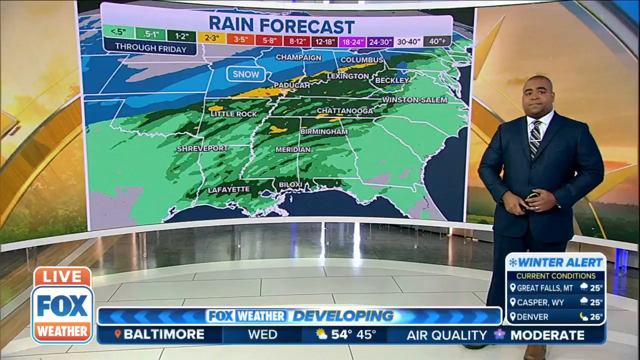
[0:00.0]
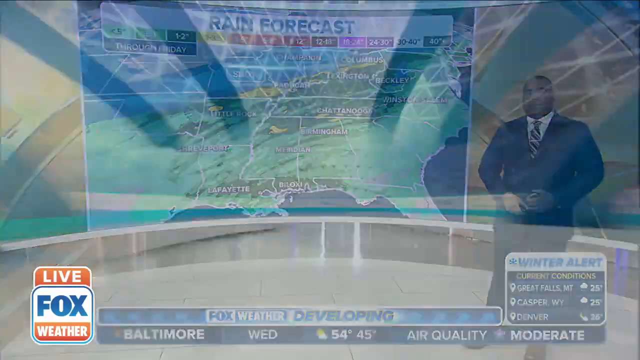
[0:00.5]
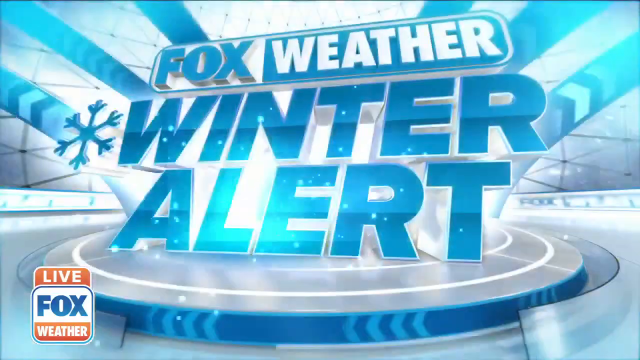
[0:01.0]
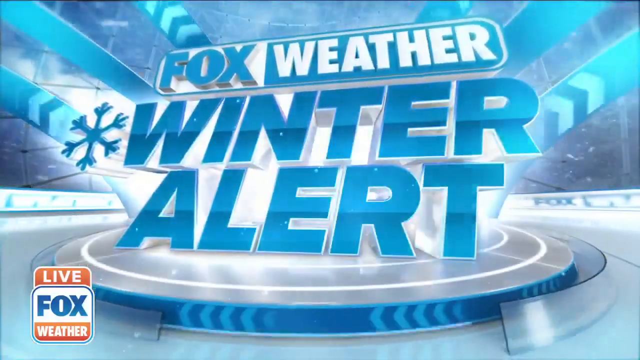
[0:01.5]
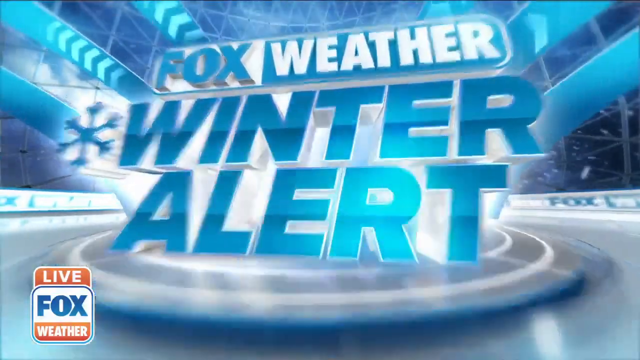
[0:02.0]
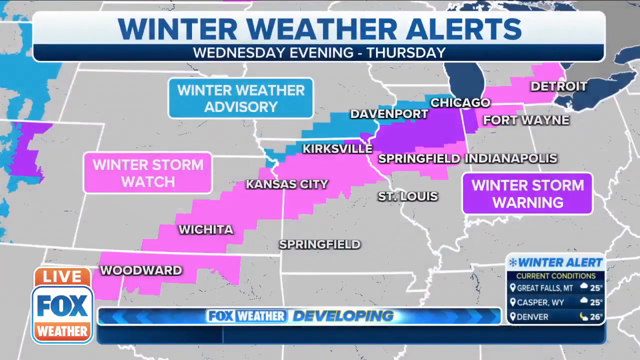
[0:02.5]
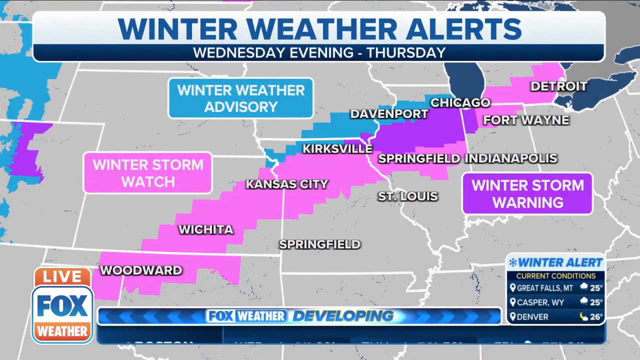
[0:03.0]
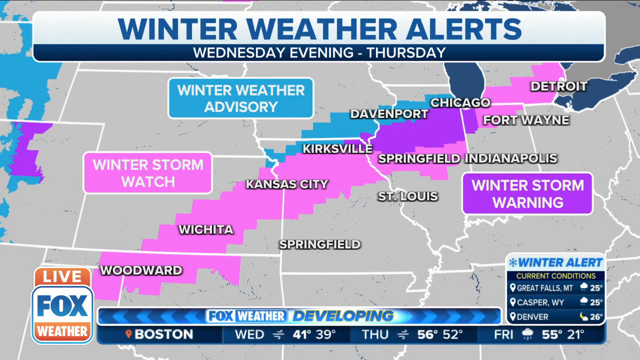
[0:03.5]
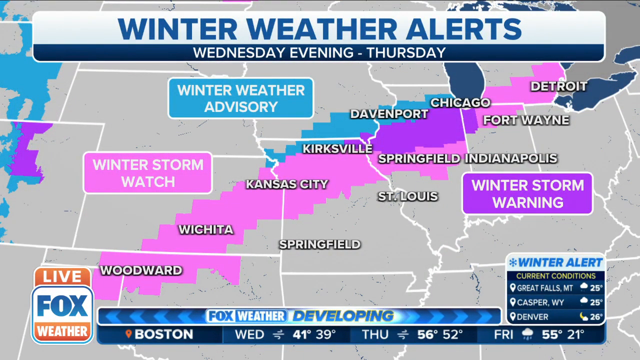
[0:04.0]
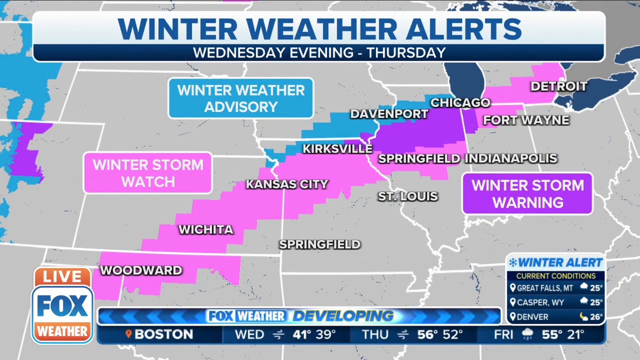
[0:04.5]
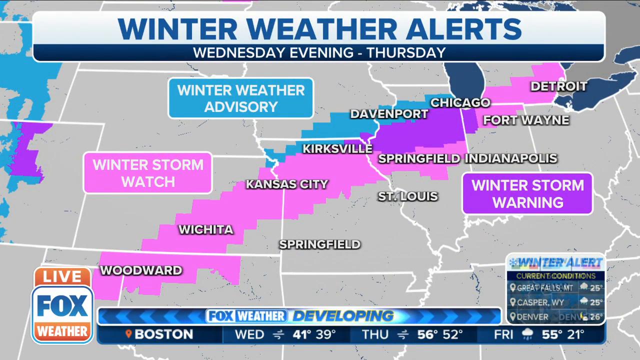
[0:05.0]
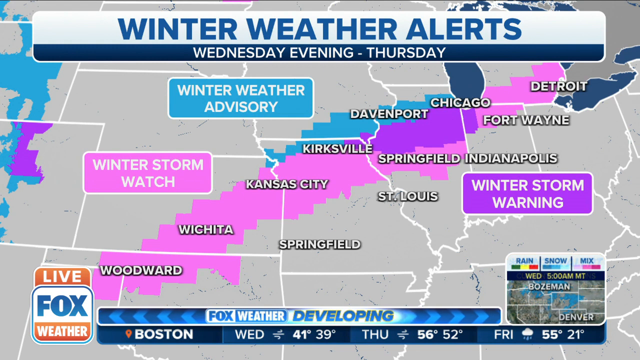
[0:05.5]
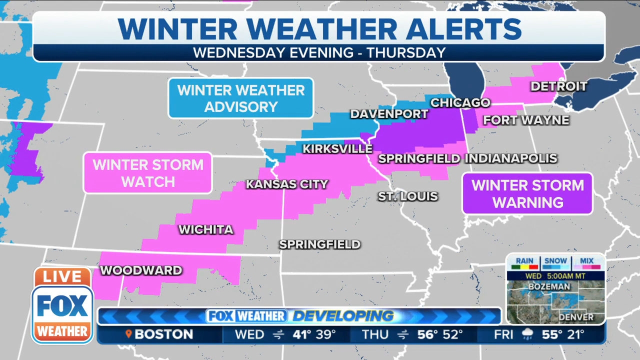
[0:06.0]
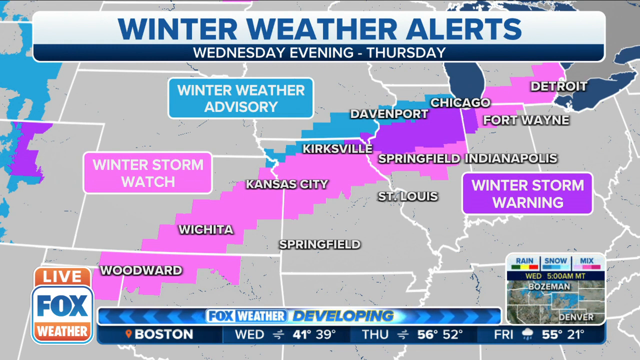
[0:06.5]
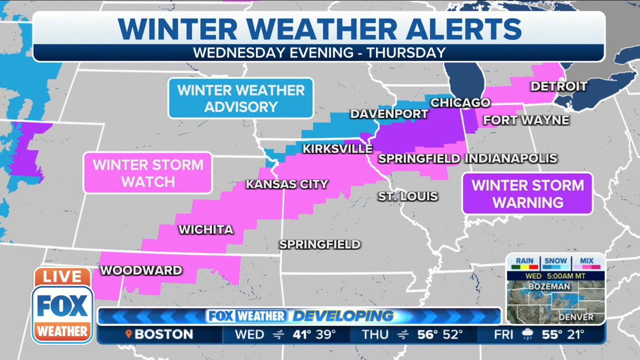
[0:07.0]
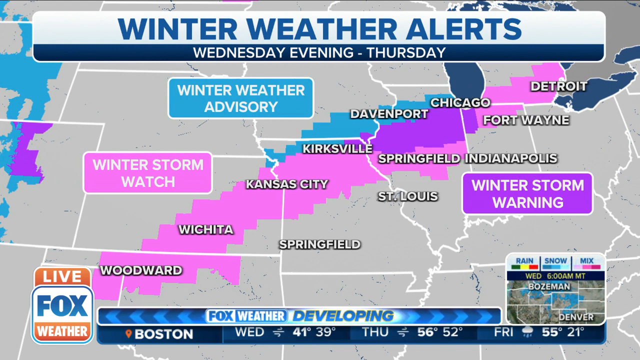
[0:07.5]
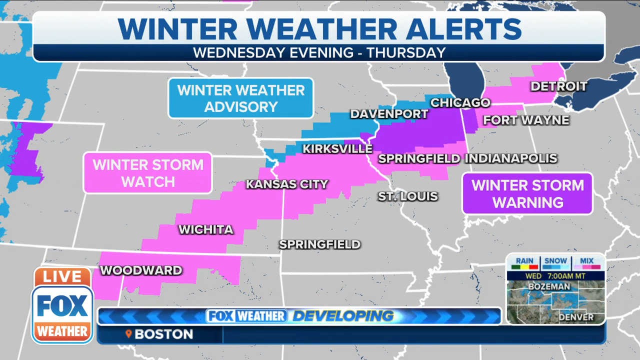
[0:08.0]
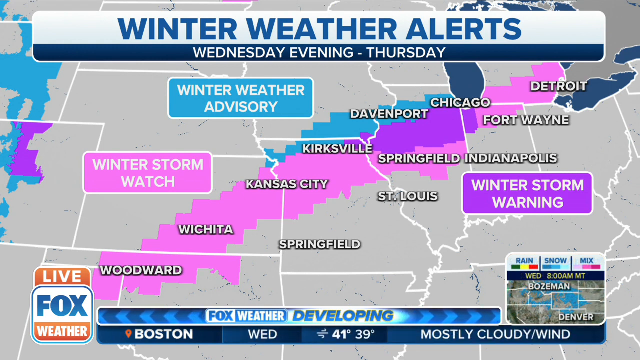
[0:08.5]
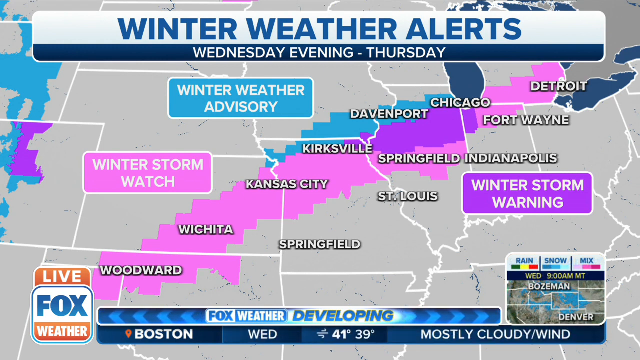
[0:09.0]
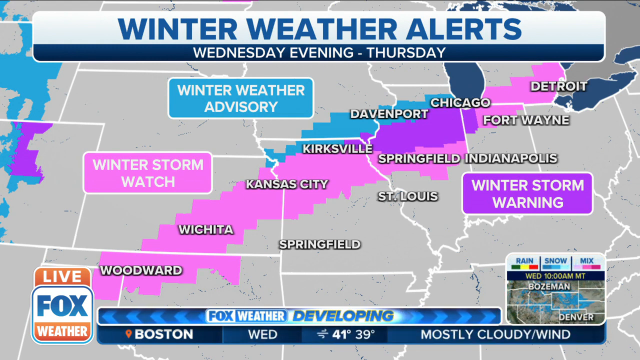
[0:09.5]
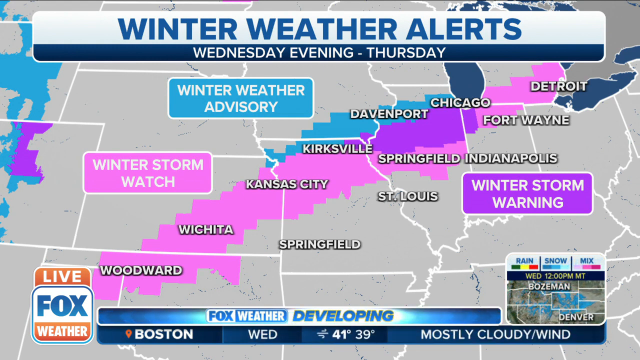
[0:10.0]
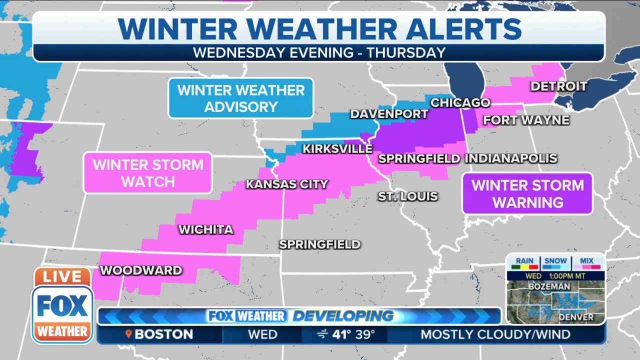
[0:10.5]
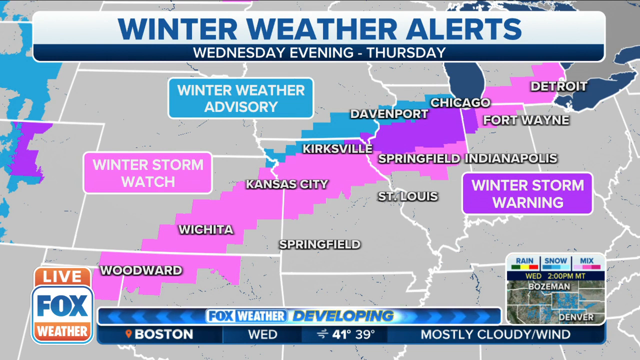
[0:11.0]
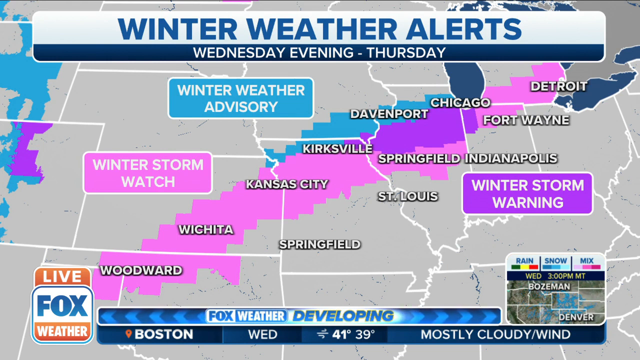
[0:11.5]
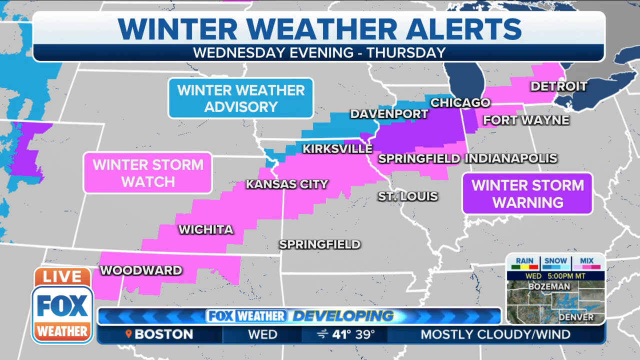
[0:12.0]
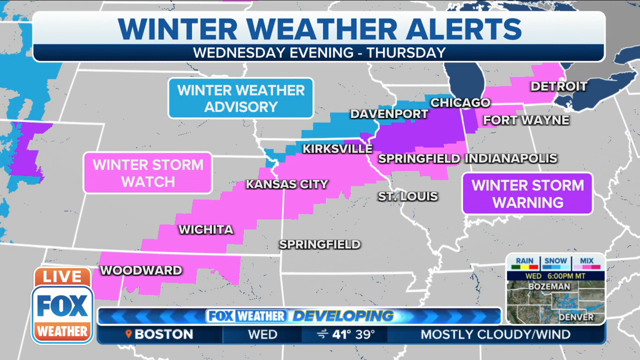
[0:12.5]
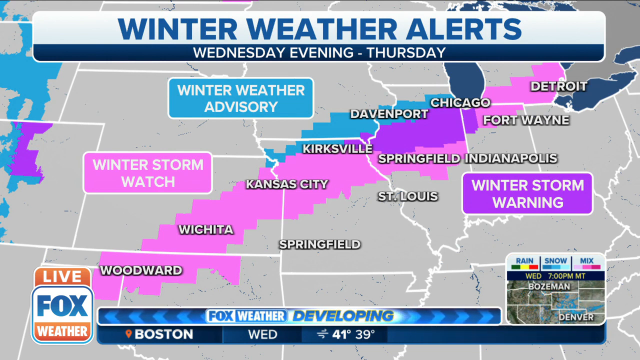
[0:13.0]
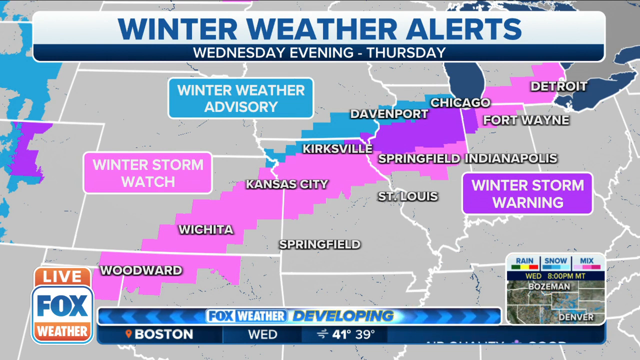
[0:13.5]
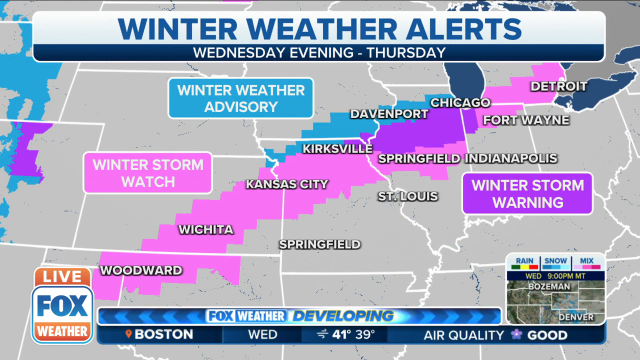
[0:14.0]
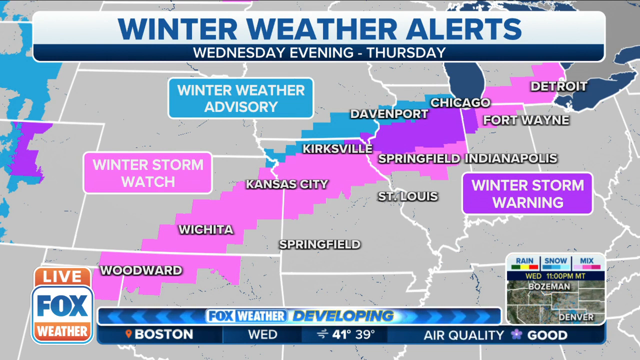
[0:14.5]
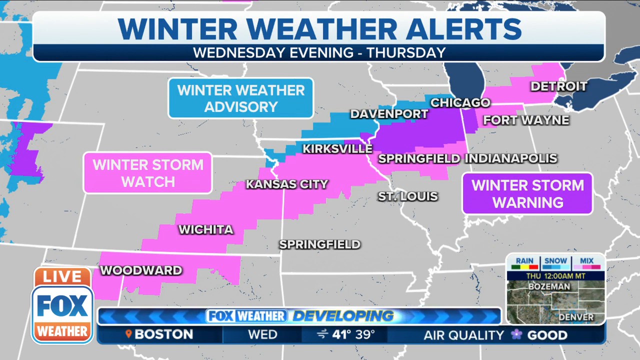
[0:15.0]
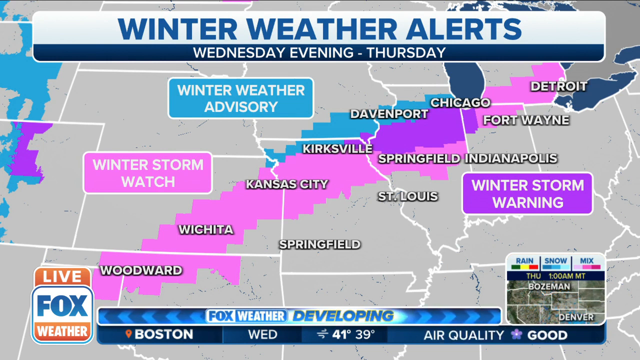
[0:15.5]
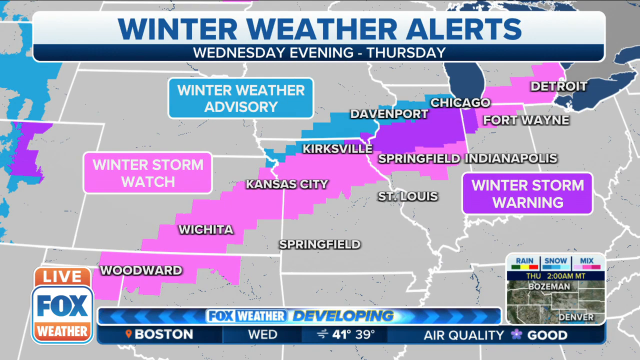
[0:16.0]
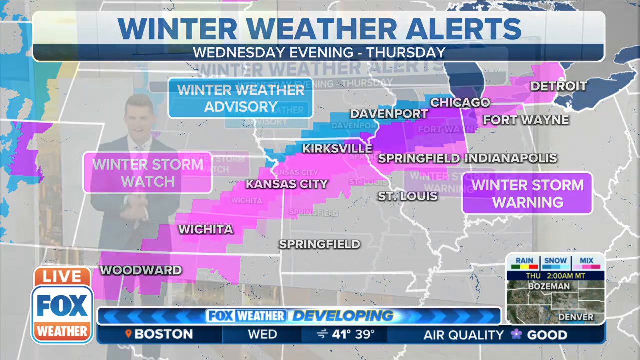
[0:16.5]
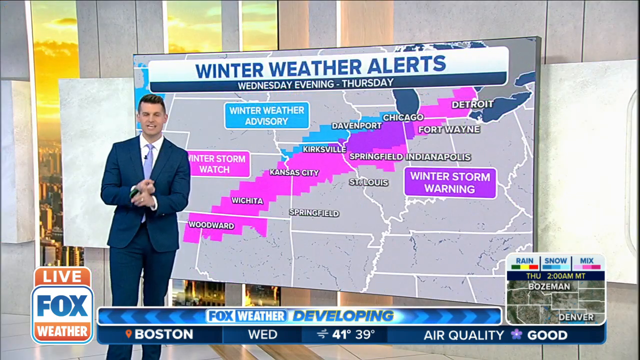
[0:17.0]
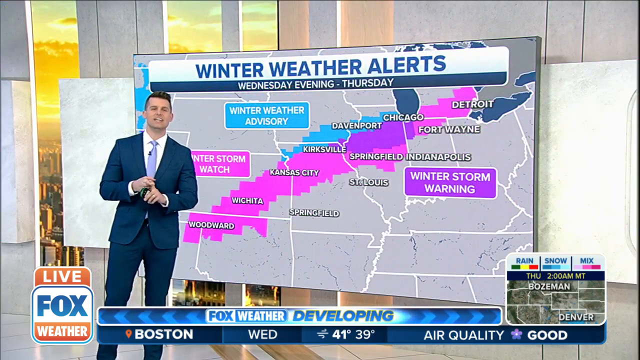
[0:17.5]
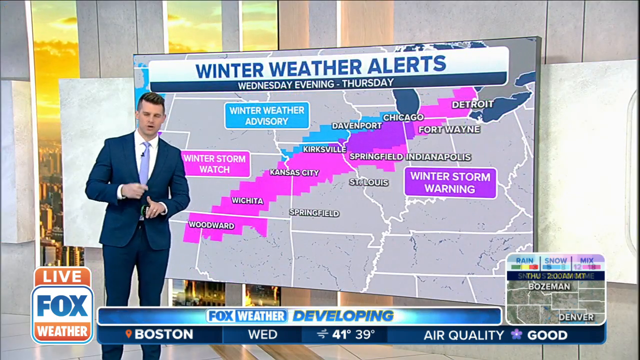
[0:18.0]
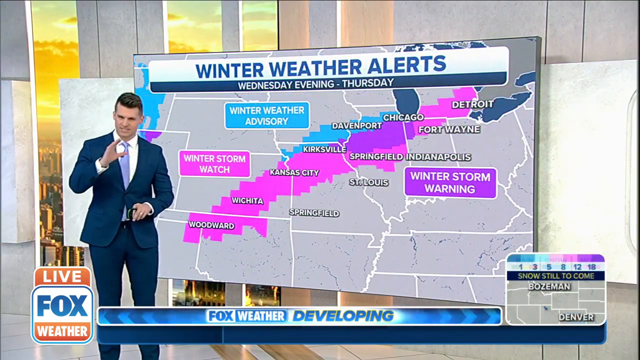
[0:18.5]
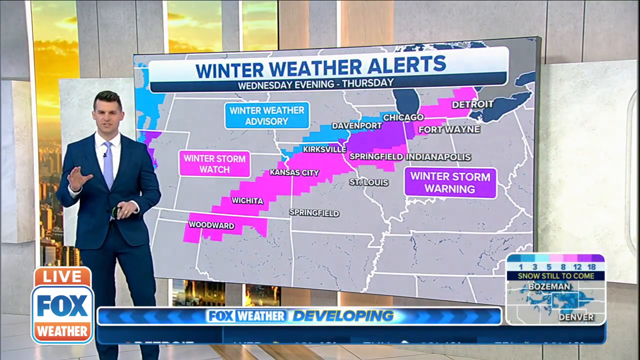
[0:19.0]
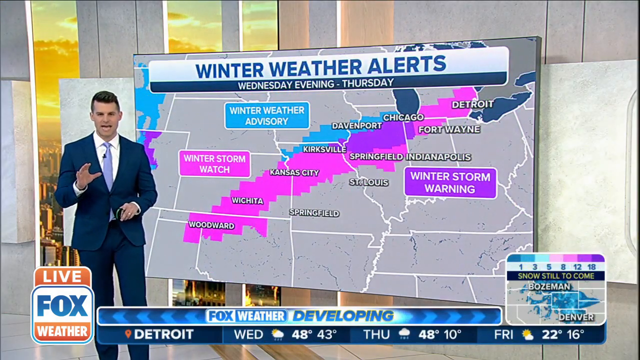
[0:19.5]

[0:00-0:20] A Fox News reporter appears with the on-screen text "Fox Weather Winter Alert." A map of the Midwestern United States shows Kansas, Missouri, Nebraska, and Colorado in the far west, extending across Oklahoma into Kansas and Missouri, and apparently Iowa, Ohio, and Indiana. A big, long pink streak marks the winter storm, stretching from Woodward, Wichita, Kansas City, Kirksville, and Springfield all the way up to Chicago, Fort Wayne, and Detroit. A purple area labeled "Winter Storm Warning" mostly covers Davenport and Chicago. The bottom left reads "Live Fox News," and the bottom right reads "Winter Alert, Current Condition," with various current local temperatures listed. Along the bottom, text reads "Fox Weather Developing, Boston Wednesday, 41 degrees, 31 degrees, mostly cloudy, windy"; it also shows Wednesday for Boston with a 41-degree high and a 39-degree low. A meteorologist stands in front of a big weather board, using hand gestures as he presents the weather. Finally, the first meteorologist stands in front of a different map, apparently of the lower southeastern half of the country, with many green and dark green areas indicating rain, yellow areas for heavier rain, and blue and light blue areas mostly for snow.